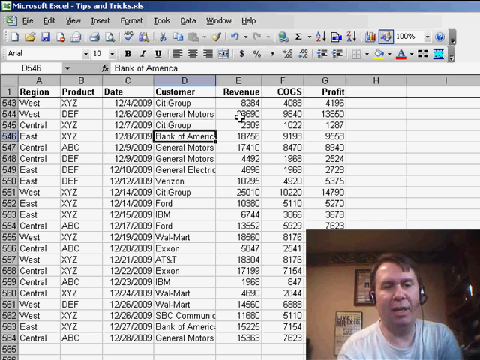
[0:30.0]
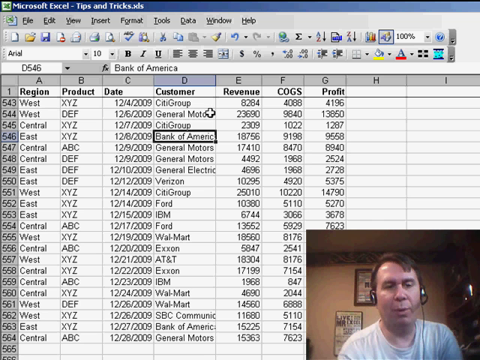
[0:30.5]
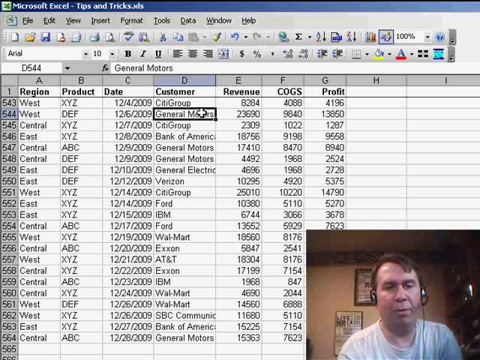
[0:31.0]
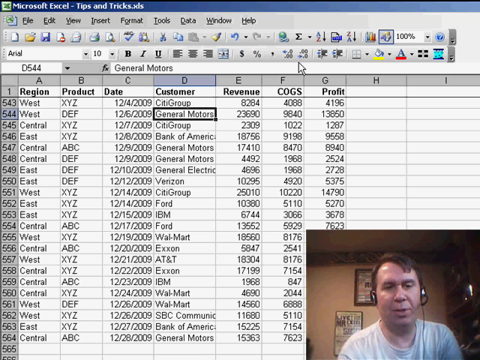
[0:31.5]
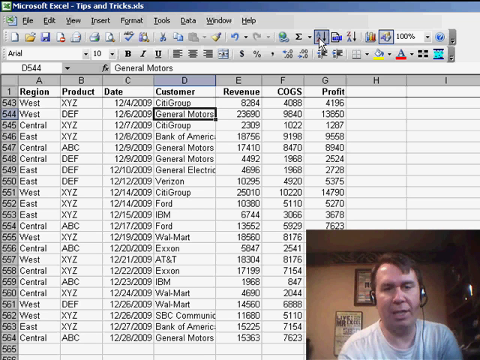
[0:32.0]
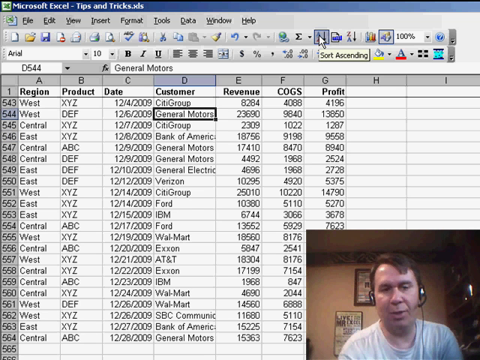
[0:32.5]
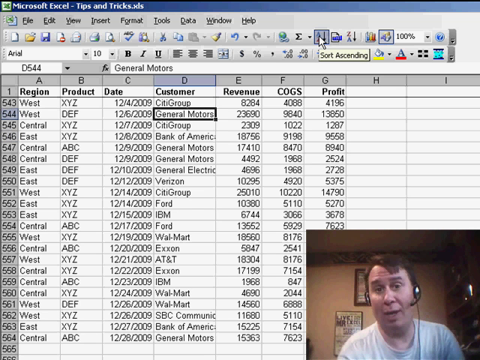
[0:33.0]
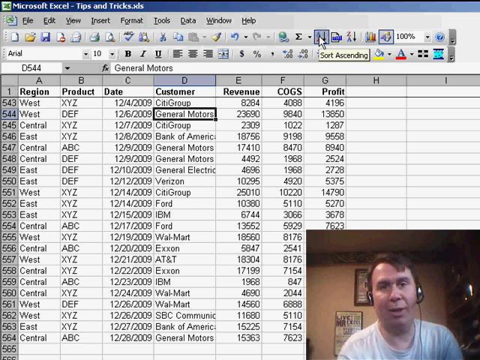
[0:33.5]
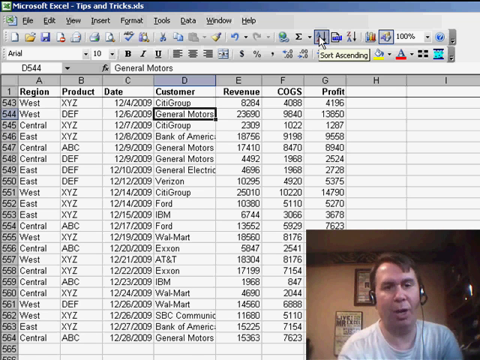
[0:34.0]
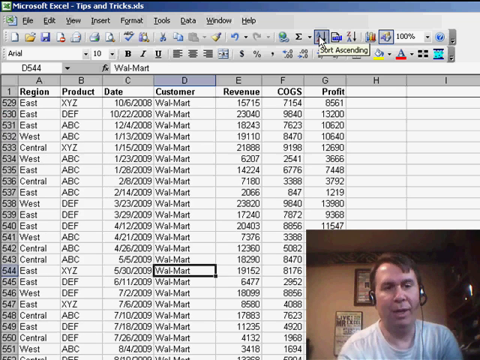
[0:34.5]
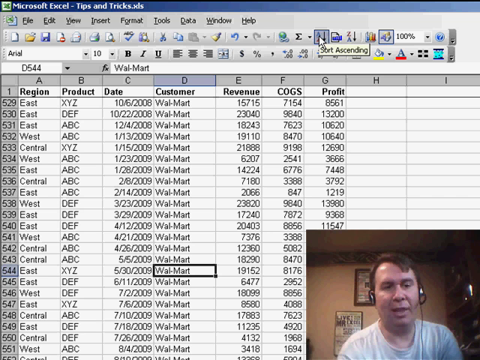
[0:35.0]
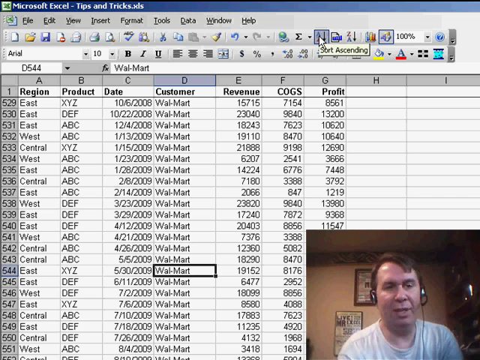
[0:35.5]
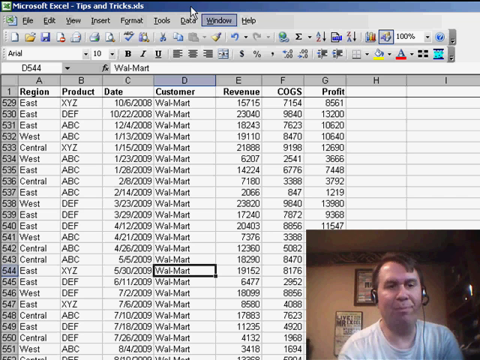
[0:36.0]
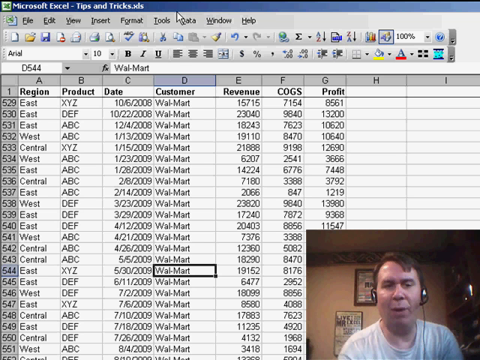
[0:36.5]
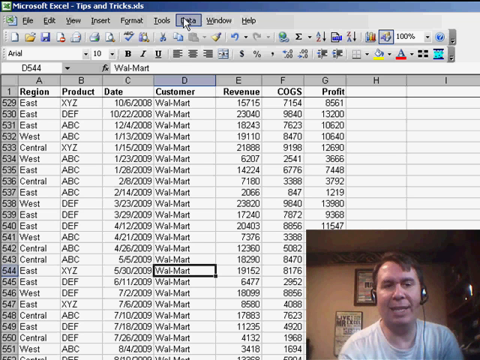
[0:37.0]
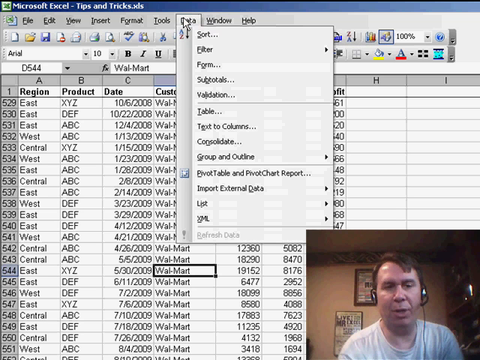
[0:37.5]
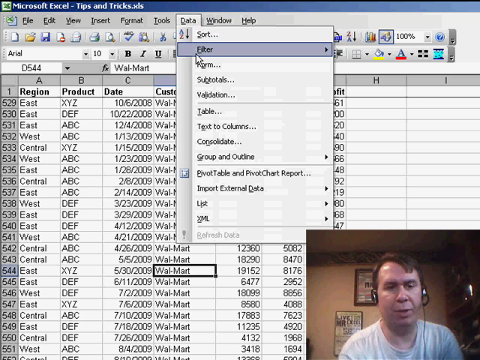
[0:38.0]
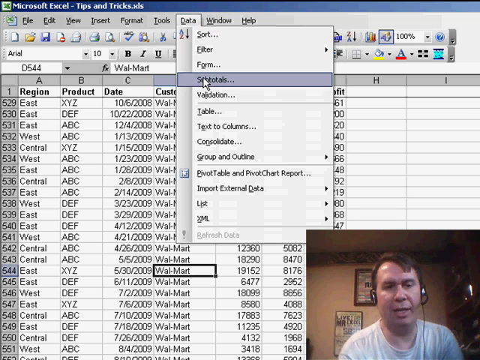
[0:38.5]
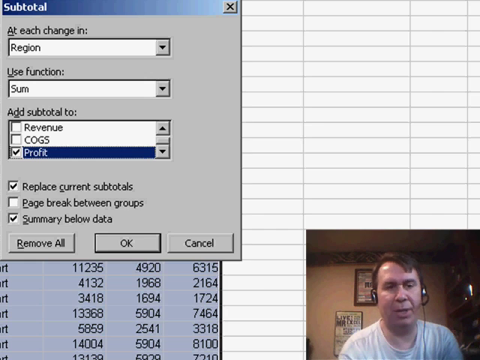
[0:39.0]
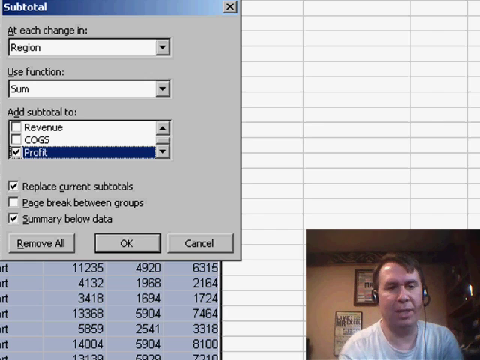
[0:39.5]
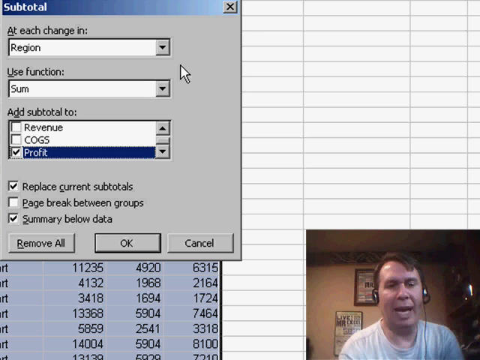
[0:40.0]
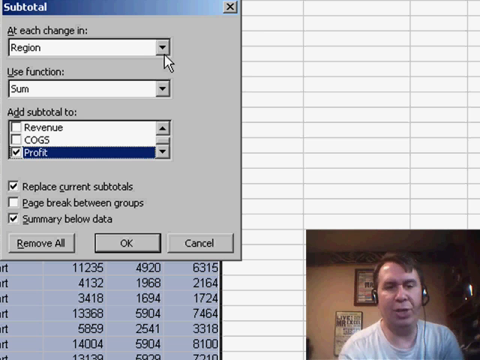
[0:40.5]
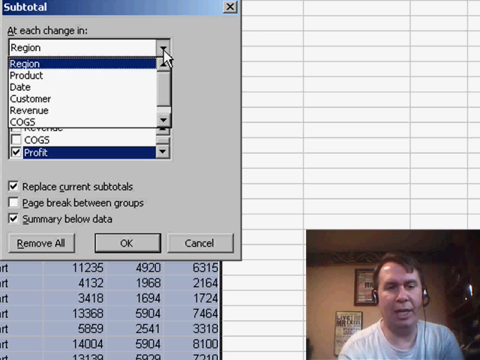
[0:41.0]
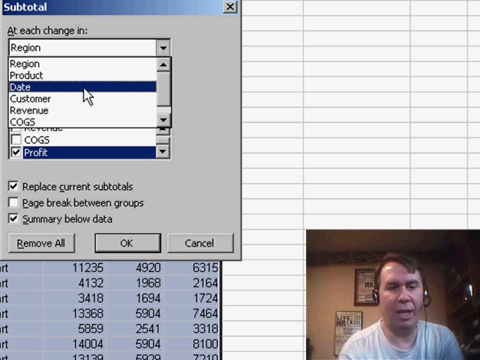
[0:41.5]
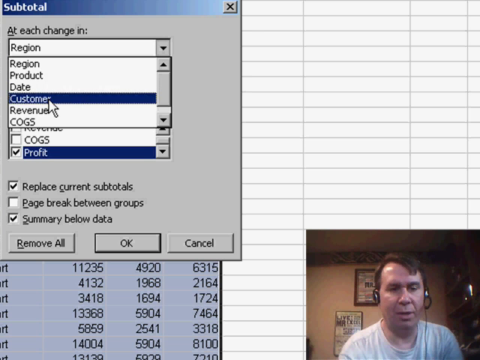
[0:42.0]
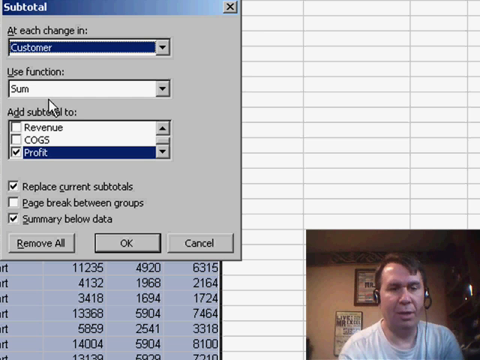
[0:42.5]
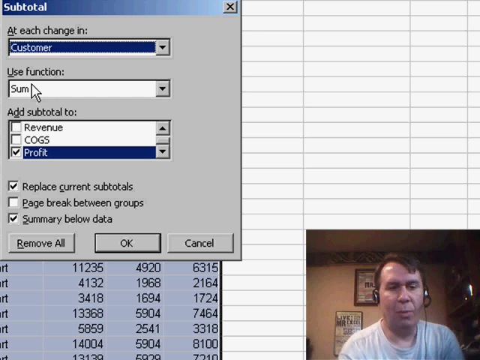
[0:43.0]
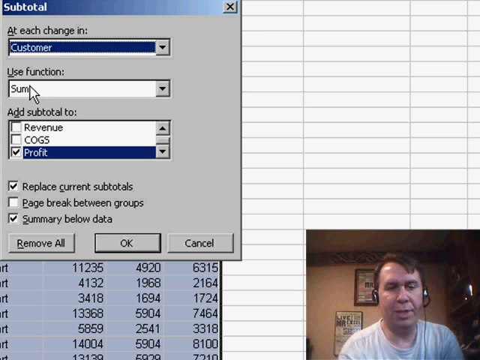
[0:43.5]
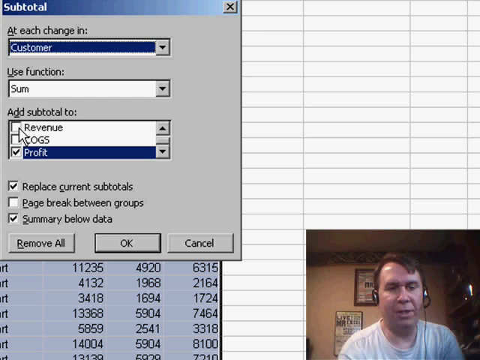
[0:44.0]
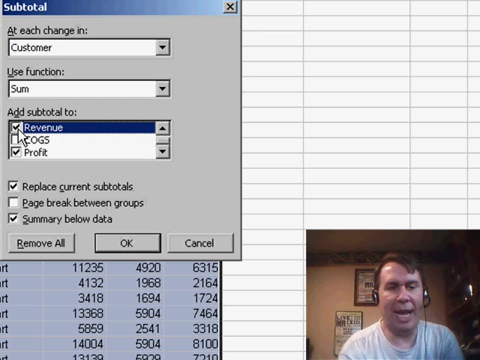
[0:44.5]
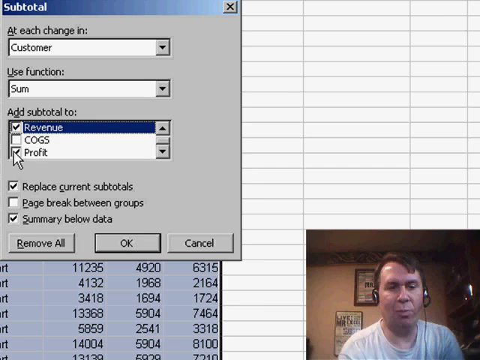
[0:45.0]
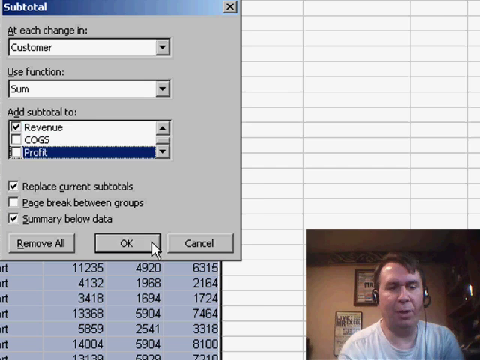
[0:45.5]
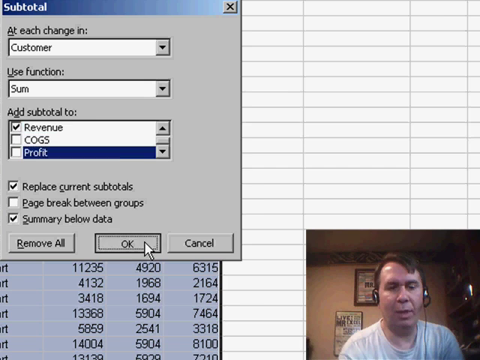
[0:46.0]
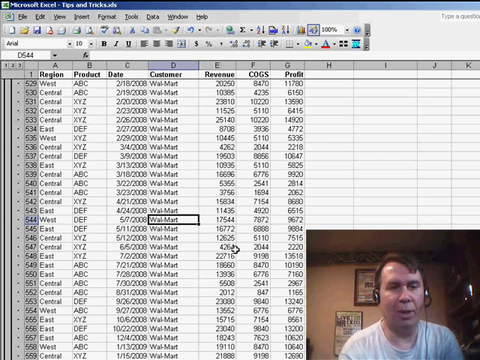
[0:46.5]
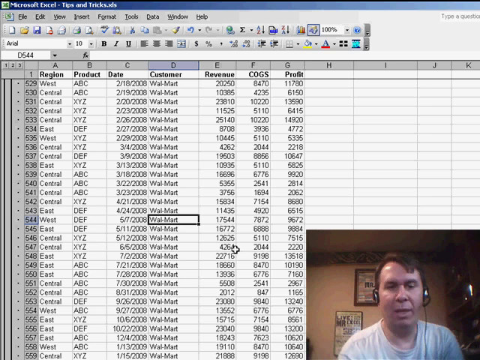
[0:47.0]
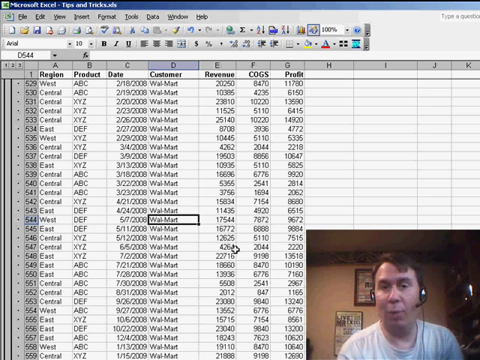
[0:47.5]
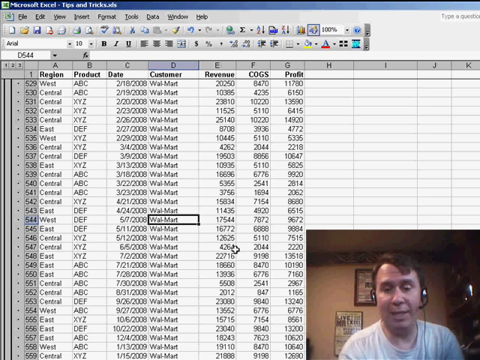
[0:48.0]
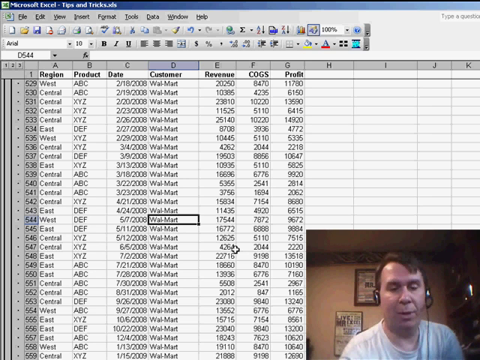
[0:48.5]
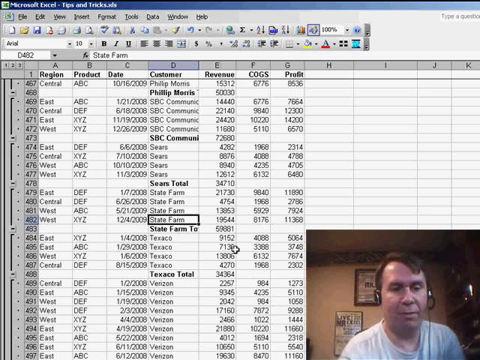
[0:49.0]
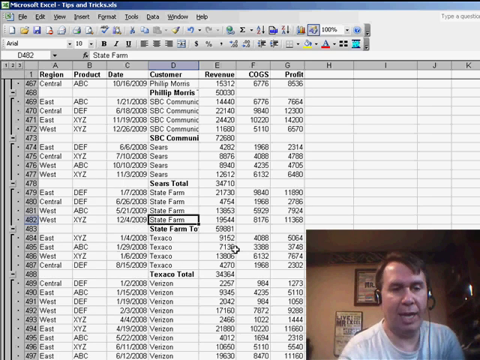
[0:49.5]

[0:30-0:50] The podcaster shows how to sort columns in ascending order. He clicks on the Data tab and then Subtotals. In the box, he changes the top field from Region to Customer, and under Add Subtotal he unchecks Profit, leaving just Revenue. A use function drop-down is left as sum. The replace current subtotals and summary below data boxes are left checked, while the page break between groups box remains unchecked. He clicks OK, and the data in the spreadsheet is reordered, broken down by customer, with what seems to be a totals section under each customer. The spreadsheet has quite a lot of rows, going down into the 500s.